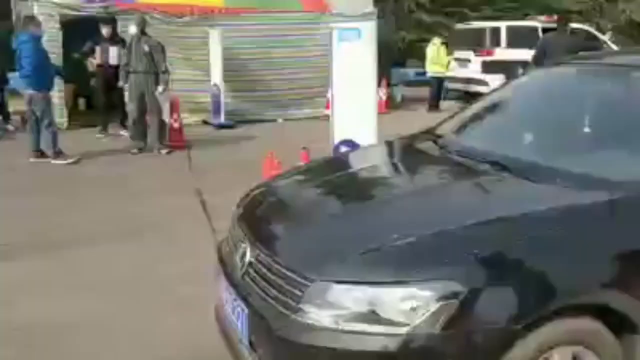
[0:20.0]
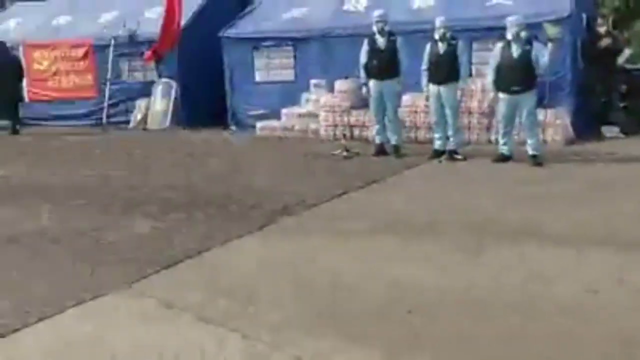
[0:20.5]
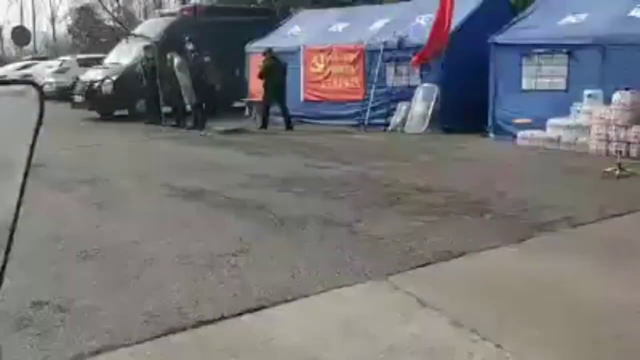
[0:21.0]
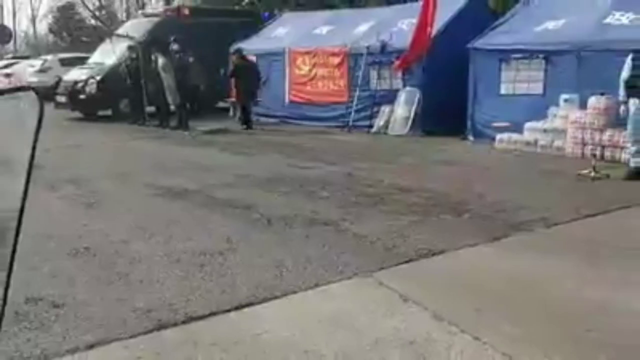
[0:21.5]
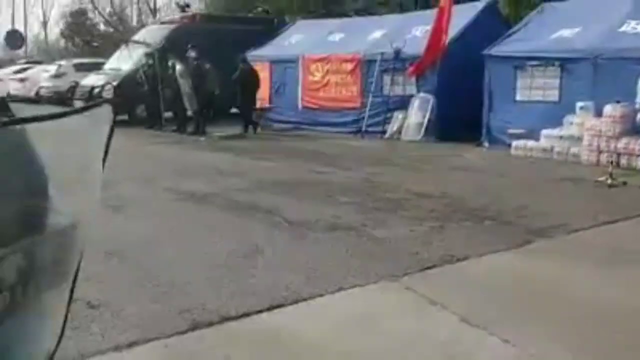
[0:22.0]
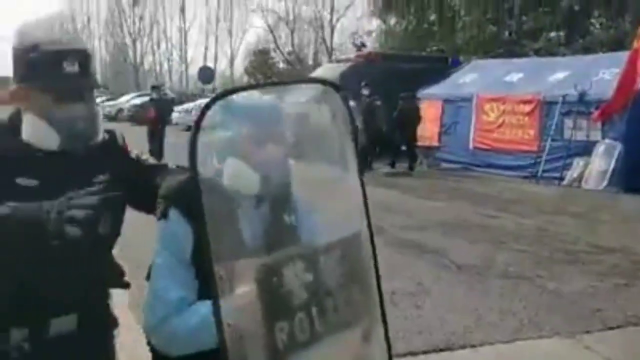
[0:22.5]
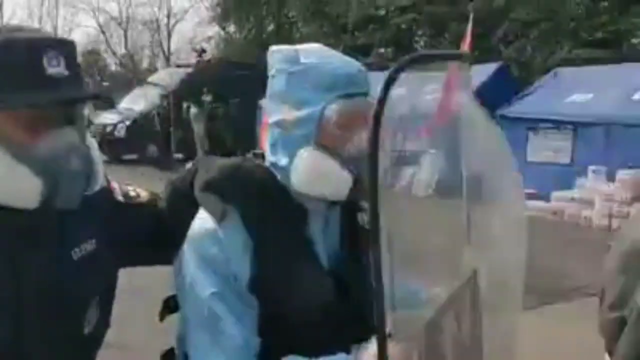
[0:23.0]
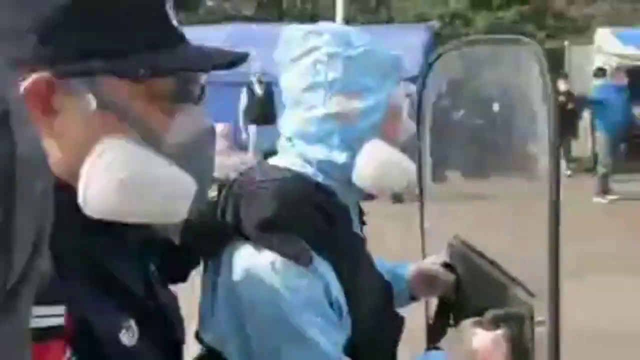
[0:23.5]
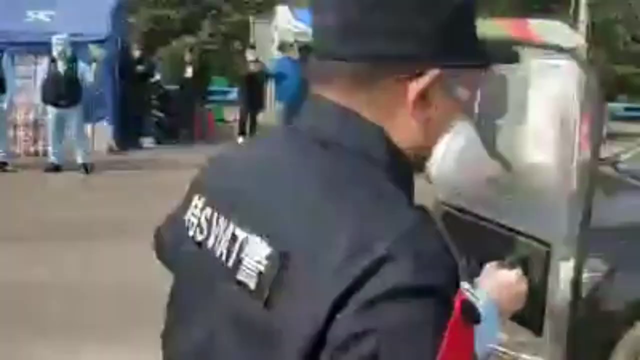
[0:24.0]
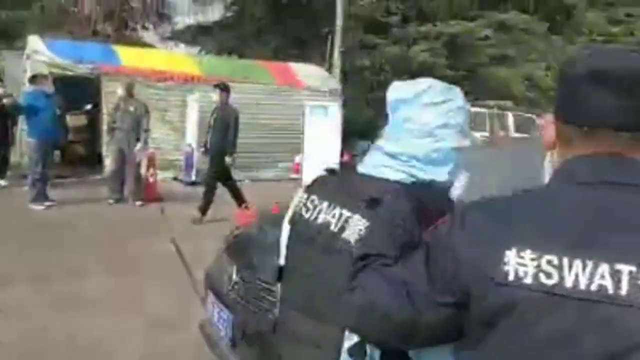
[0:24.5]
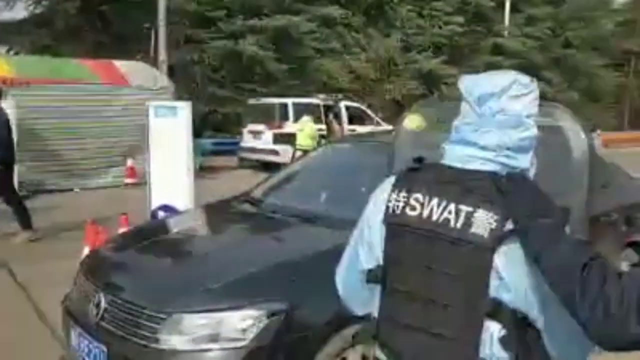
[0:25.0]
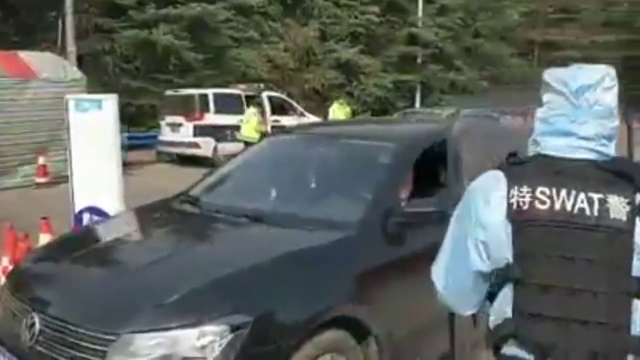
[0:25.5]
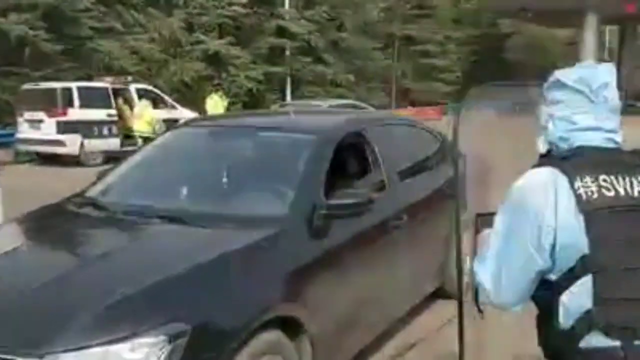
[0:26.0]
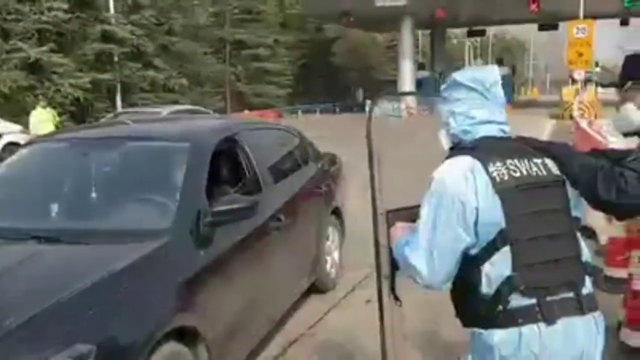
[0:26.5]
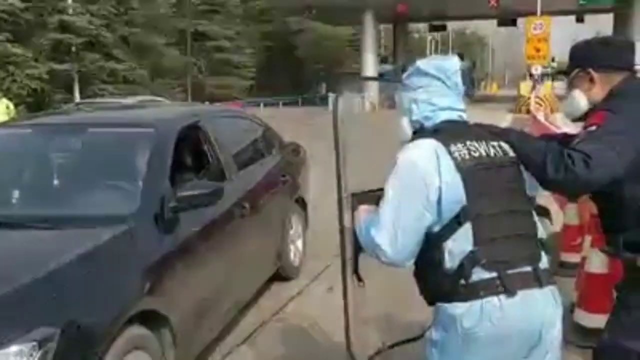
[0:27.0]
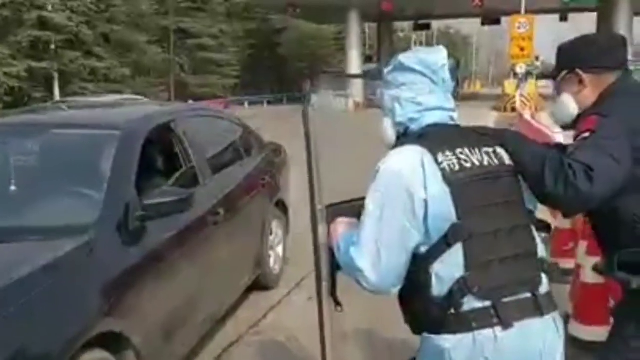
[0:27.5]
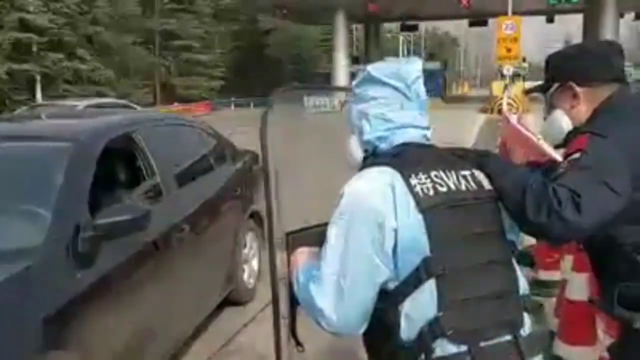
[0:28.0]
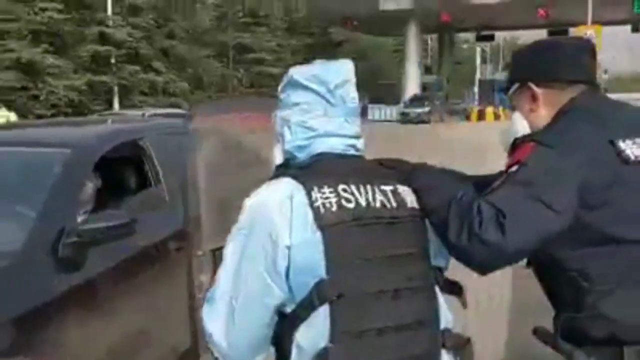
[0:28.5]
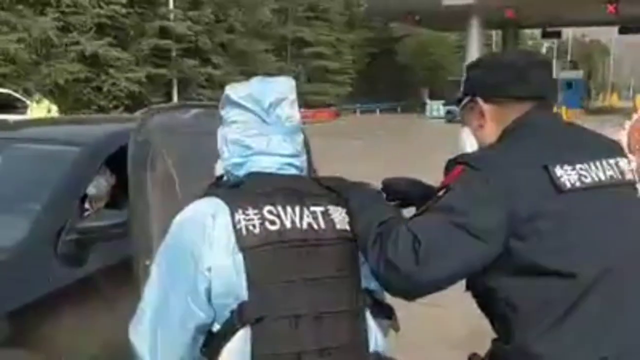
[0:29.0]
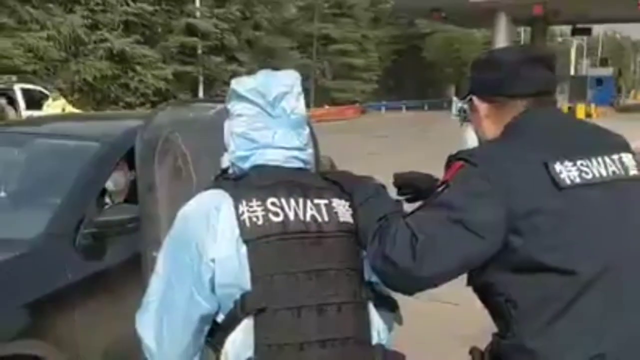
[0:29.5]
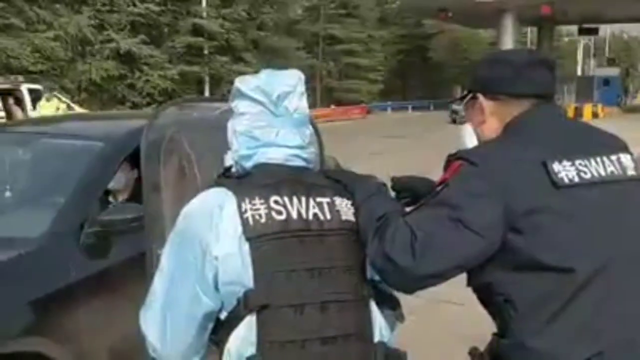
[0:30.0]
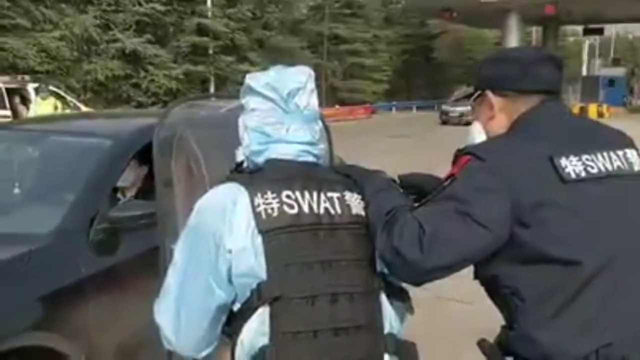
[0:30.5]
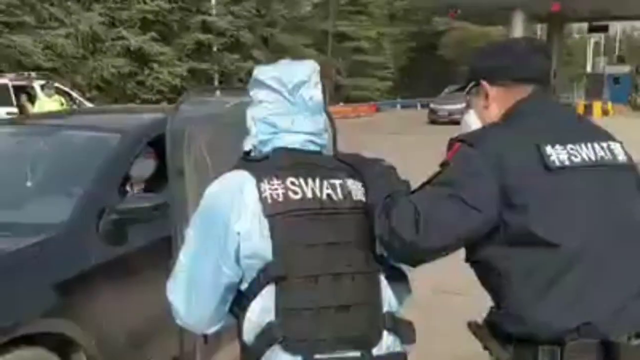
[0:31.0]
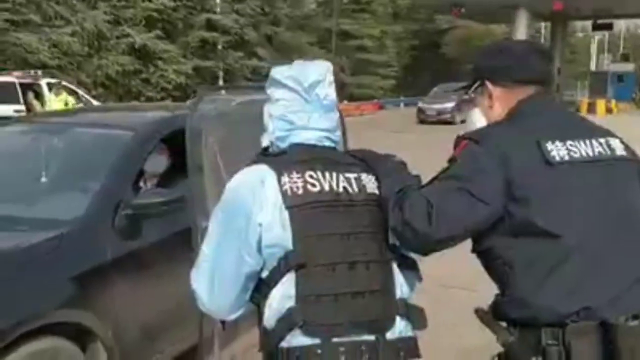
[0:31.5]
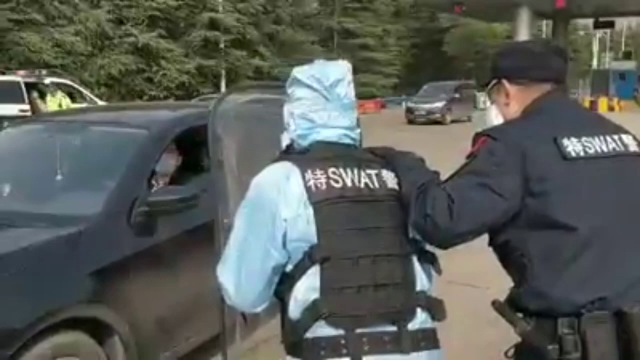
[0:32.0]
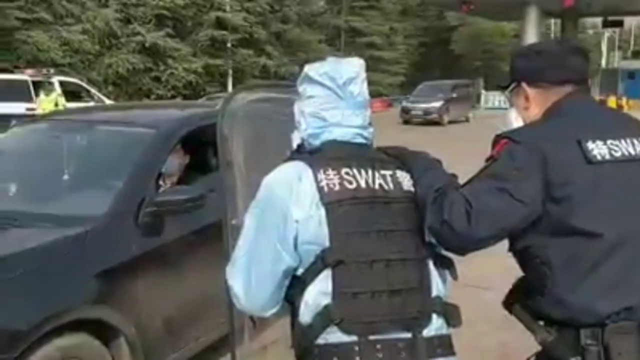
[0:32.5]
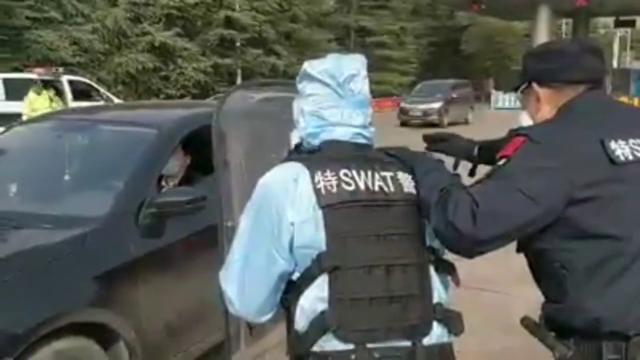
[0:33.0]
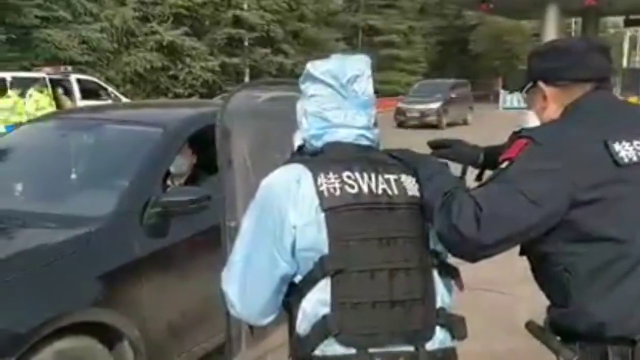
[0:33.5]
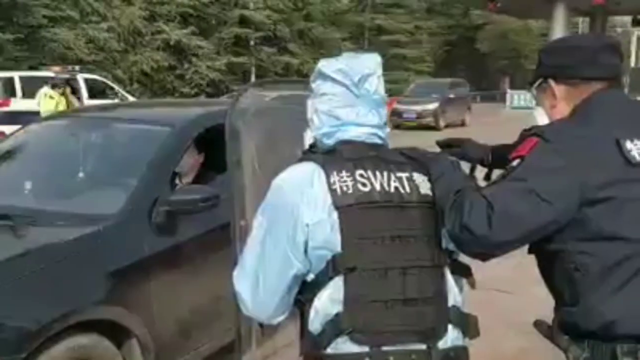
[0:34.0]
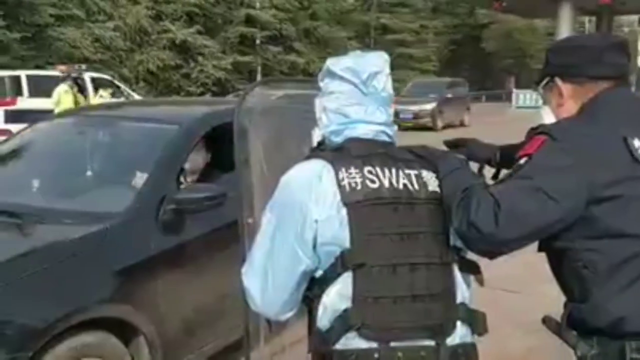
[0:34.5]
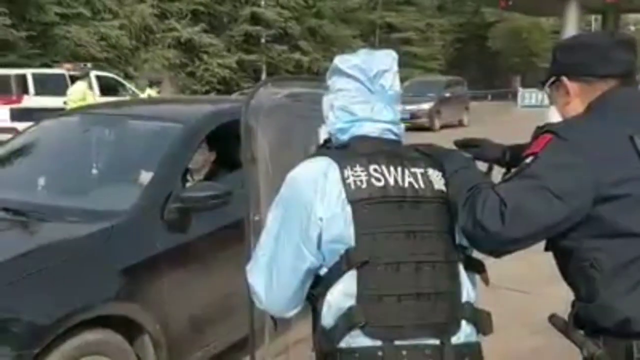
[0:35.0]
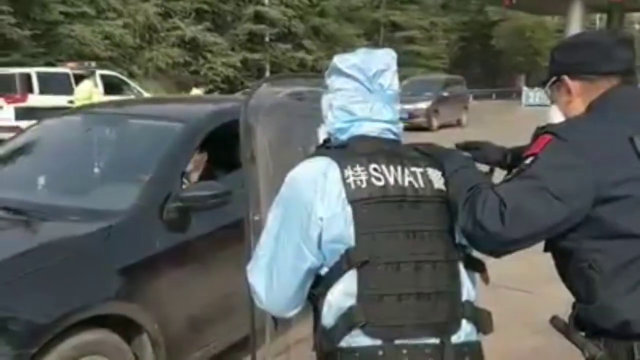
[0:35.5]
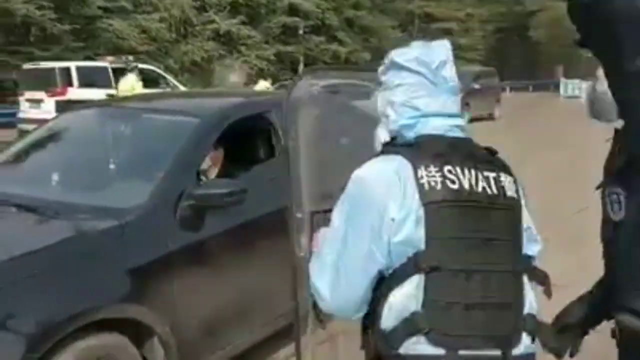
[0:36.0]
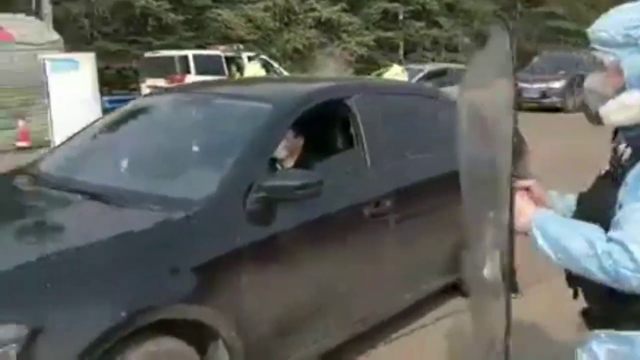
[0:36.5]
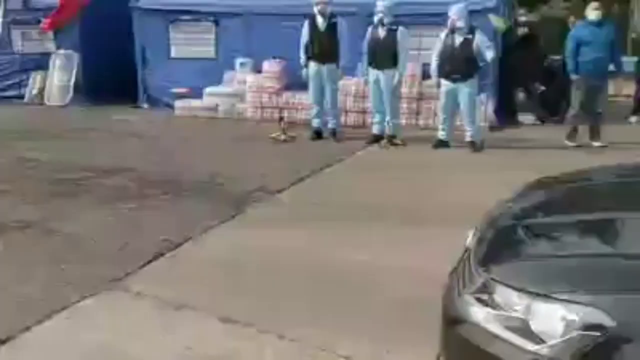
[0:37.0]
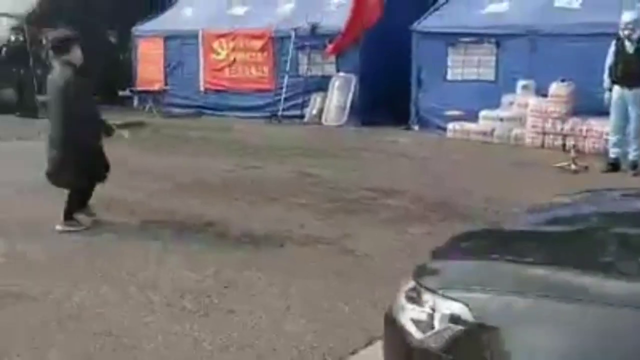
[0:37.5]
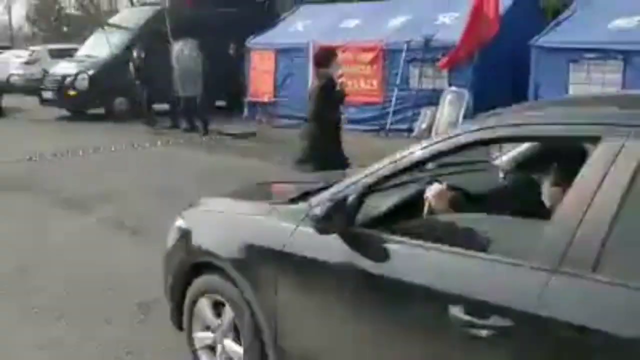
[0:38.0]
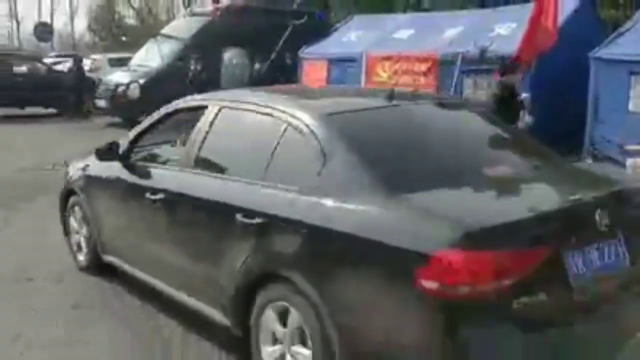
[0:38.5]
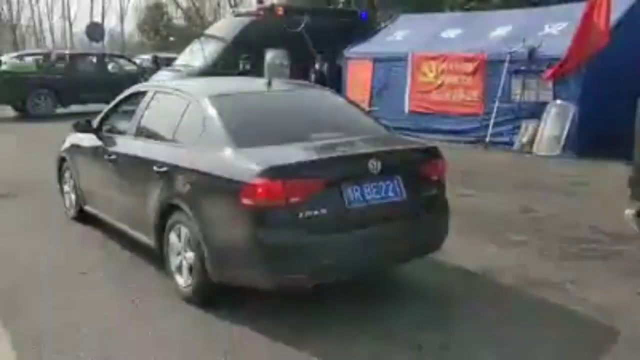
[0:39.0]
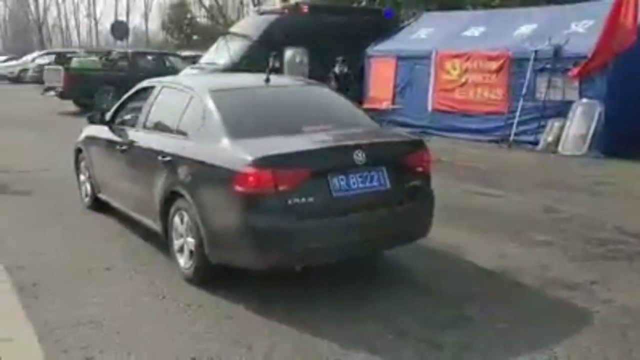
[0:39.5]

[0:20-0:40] A black VW bug is shown. In the background is a multi-colored striped tent, with several people standing around the tents. Several police officers stand around, some in black uniforms and some in blue uniforms, and behind police body shields. They approach the black car and seem to be speaking to the man sitting in the driver's seat, who has a mask on. The man then continues to drive forward and stops the vehicle abruptly. Several cars are parked along the sides of the road, and several big vehicles are parked around the different areas. It is daylight but appears to be overcast. Several orange cones are sitting around on the ground. The large vehicles have sirens with flashing lights, and there is an overpass behind the vehicle where other cars are passing through.